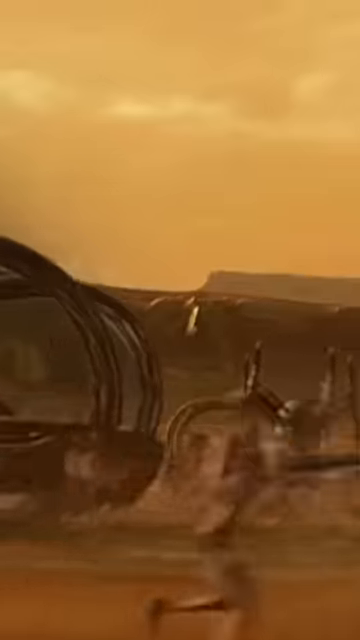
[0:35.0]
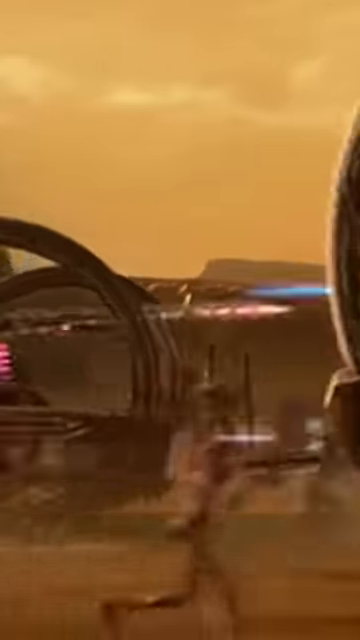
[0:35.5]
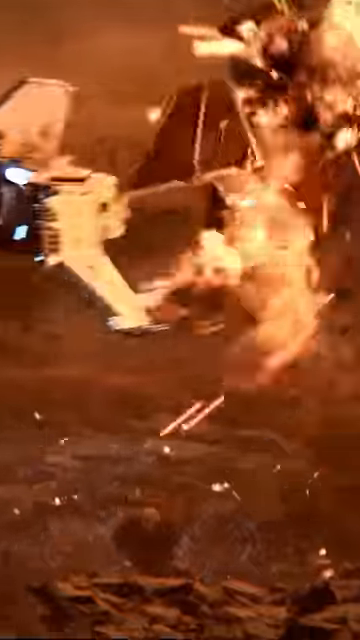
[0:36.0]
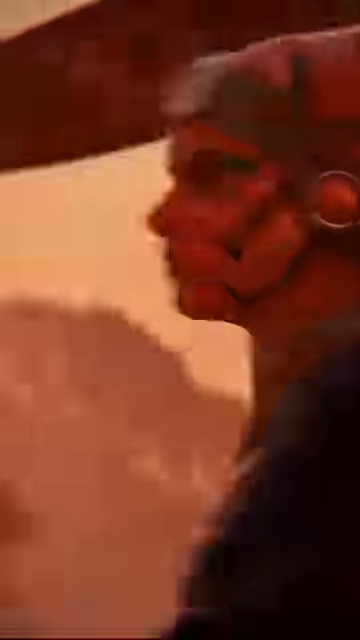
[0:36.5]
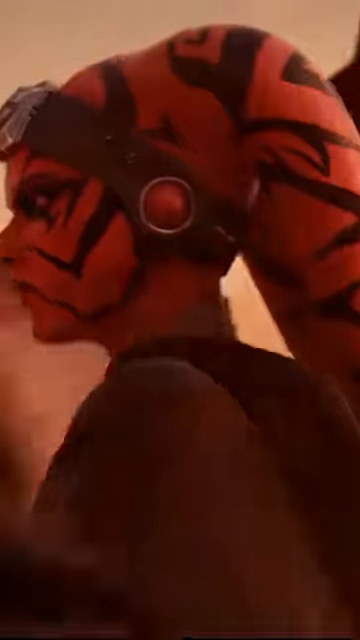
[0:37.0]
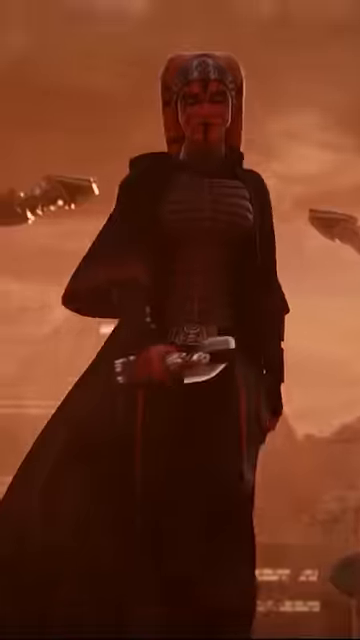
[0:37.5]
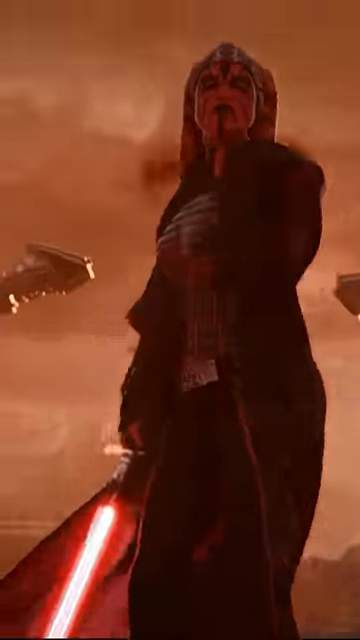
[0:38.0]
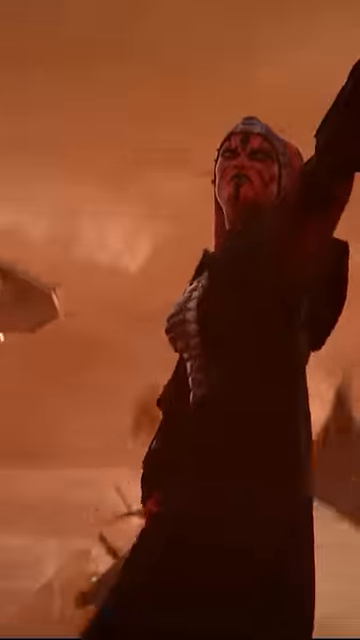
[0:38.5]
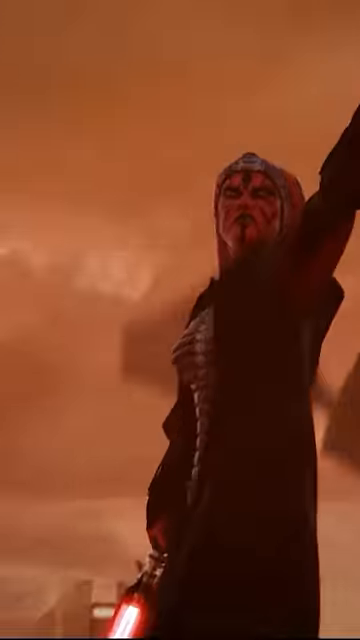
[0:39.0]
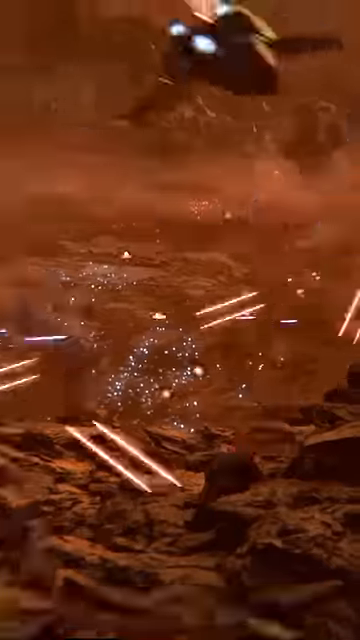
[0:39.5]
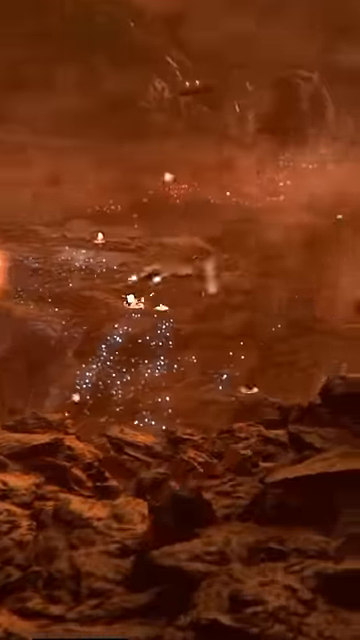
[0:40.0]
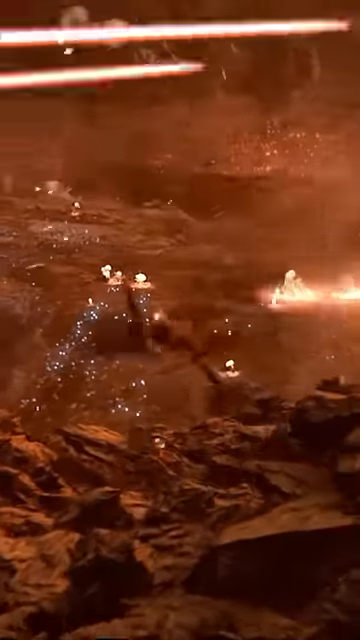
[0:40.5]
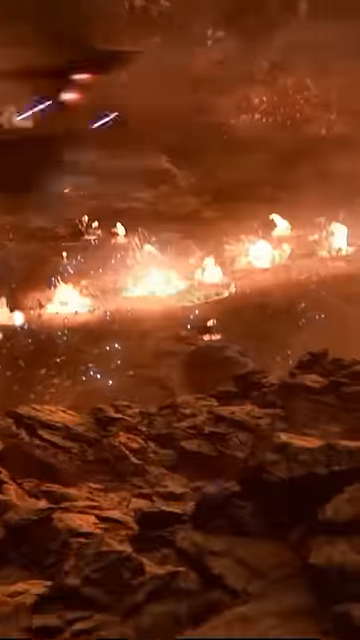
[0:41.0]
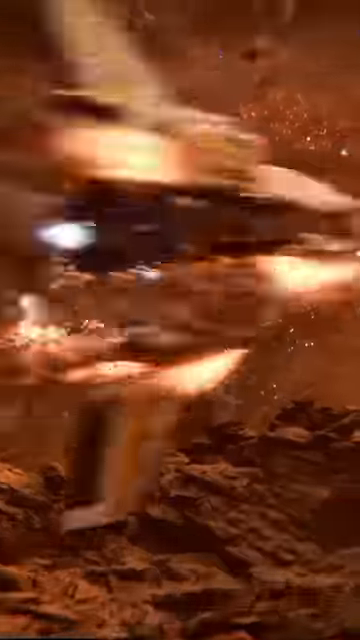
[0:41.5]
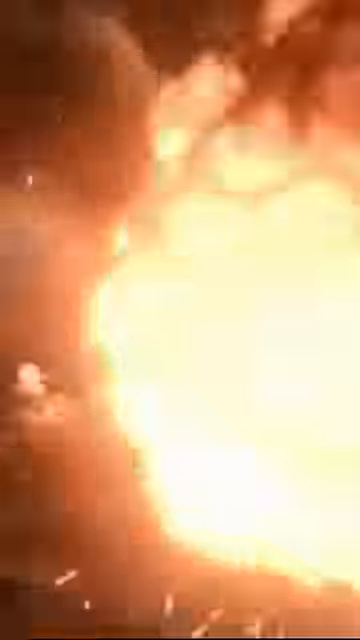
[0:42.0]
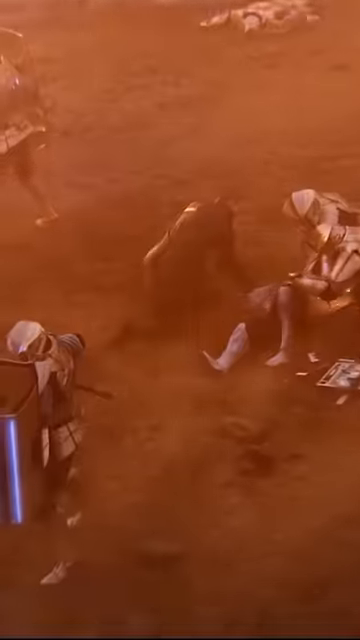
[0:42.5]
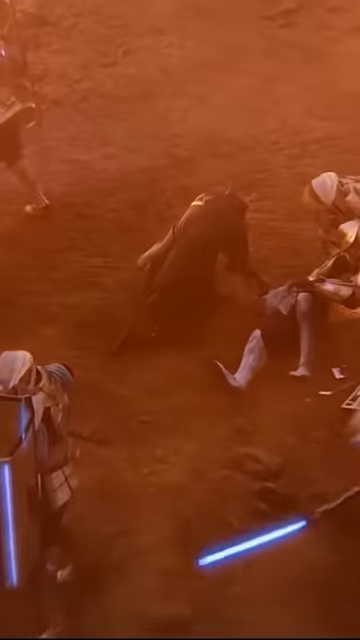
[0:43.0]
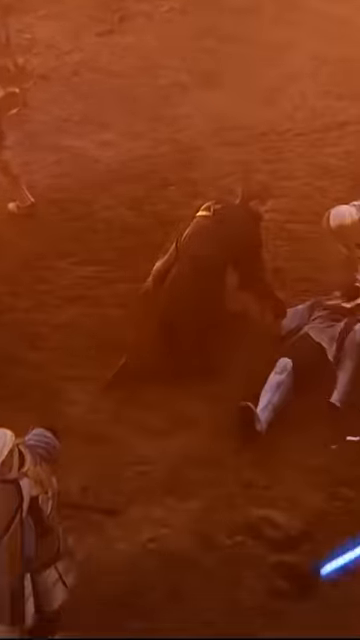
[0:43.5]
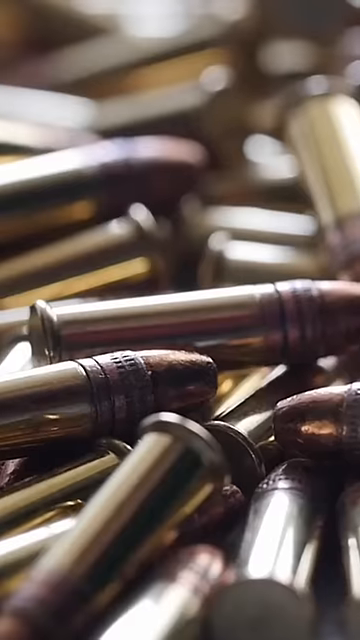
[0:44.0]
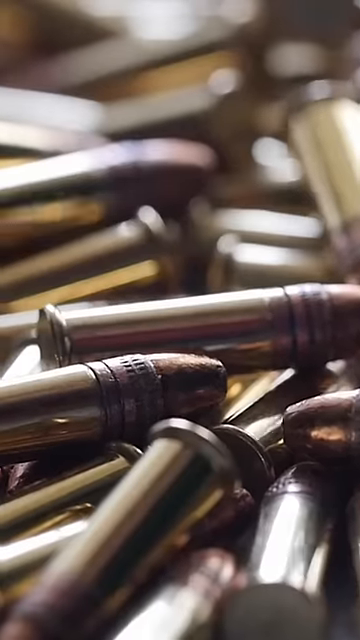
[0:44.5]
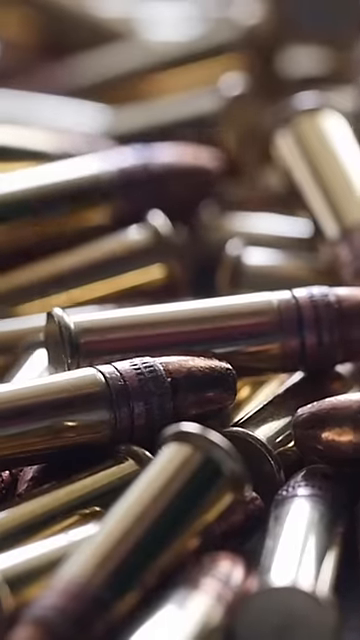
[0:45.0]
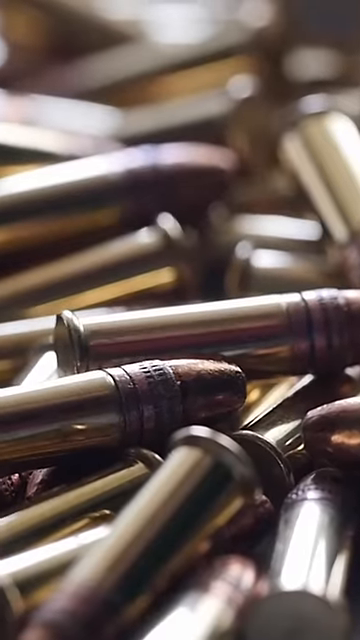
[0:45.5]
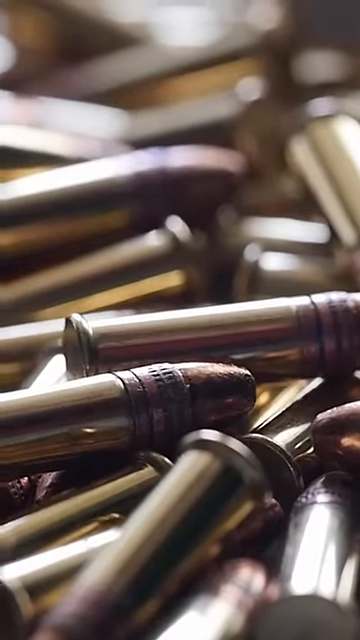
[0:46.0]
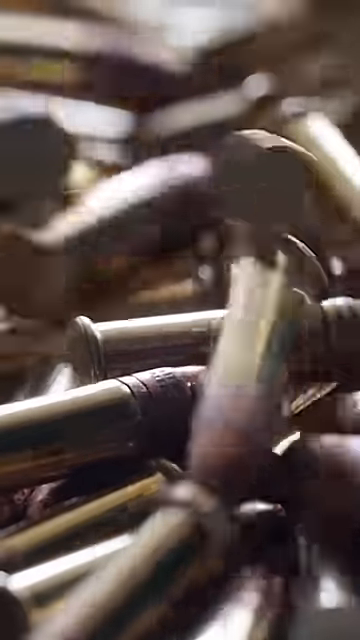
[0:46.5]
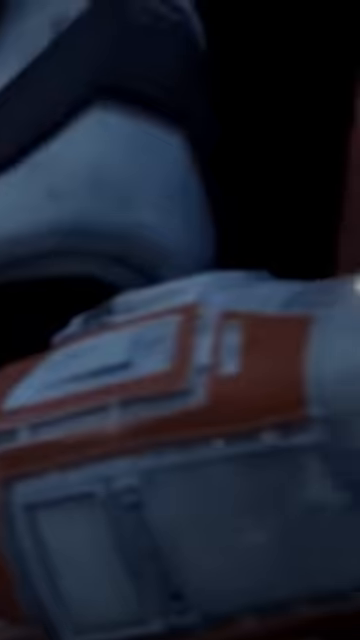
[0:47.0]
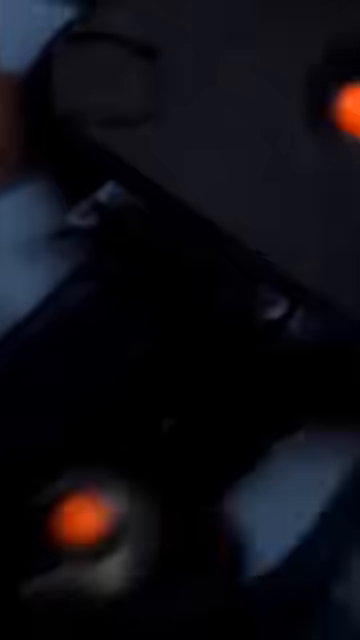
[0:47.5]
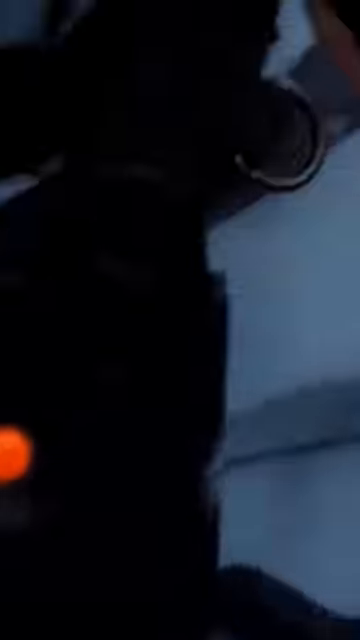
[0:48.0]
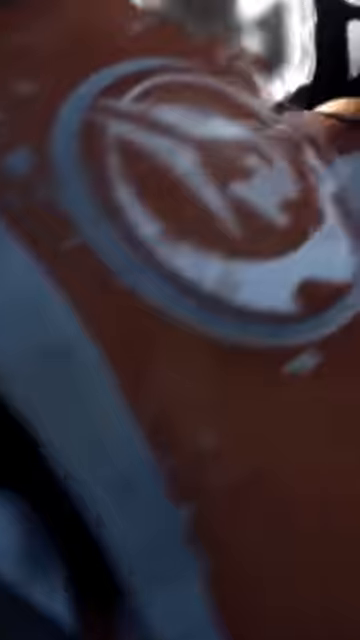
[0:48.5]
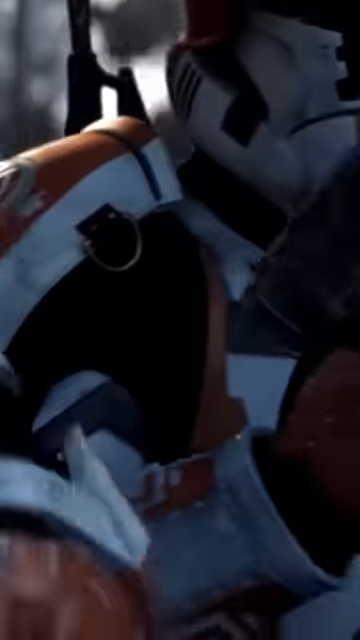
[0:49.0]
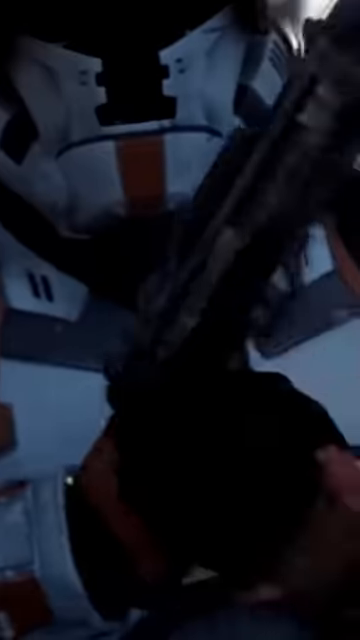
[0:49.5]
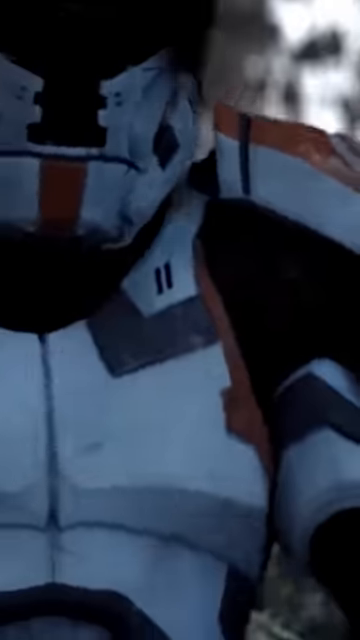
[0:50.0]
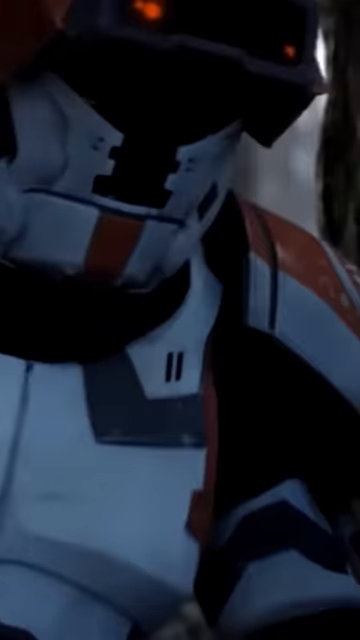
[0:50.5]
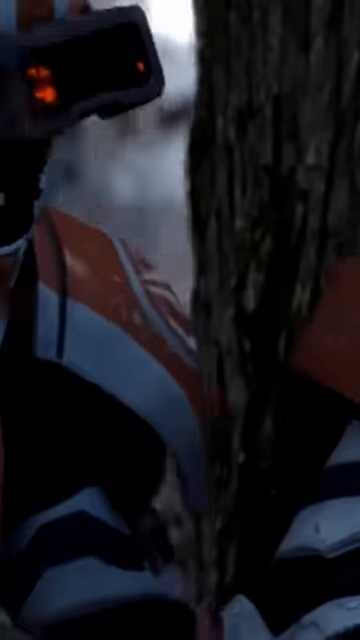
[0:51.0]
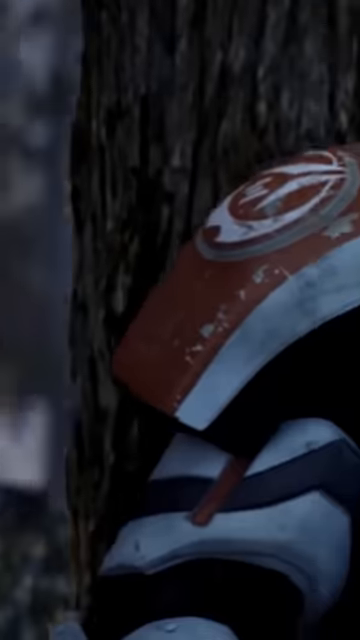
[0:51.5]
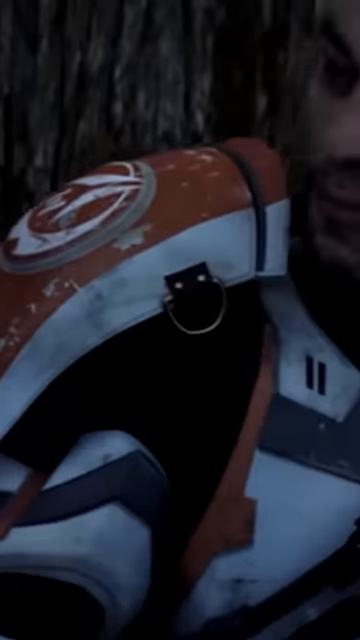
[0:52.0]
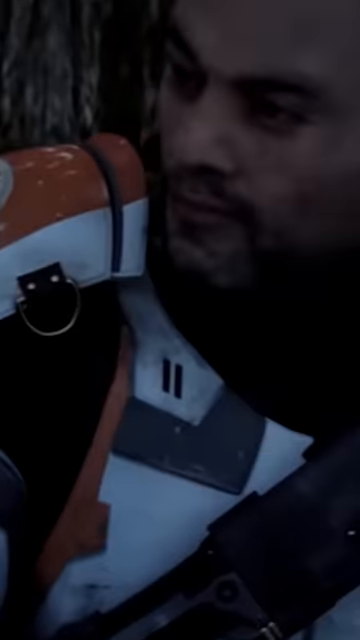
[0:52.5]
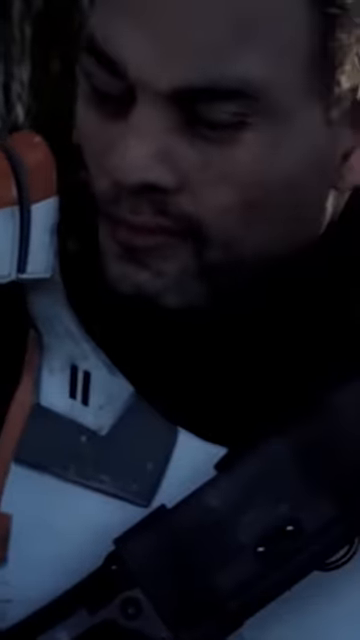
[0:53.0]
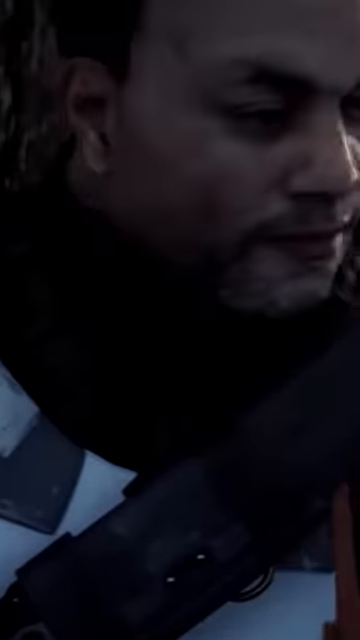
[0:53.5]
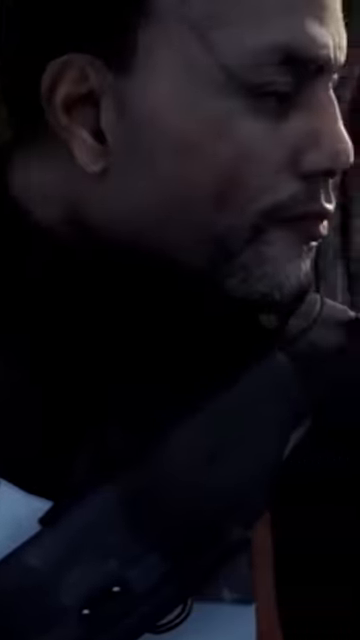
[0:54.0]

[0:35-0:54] A Star Wars scene looks like a war, with everything in the area exploding. A whole bunch of ammunition follows, apparently gold bullets, possibly 9mm, and apparently not hollow point. Then three warriors appear, one of them without his helmet, standing behind a tree for cover and loading their weapons, seemingly about to go into battle. The apparent leader has a huge scar on his face around his eye.